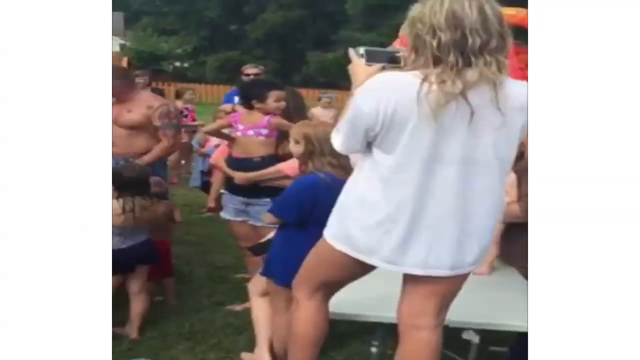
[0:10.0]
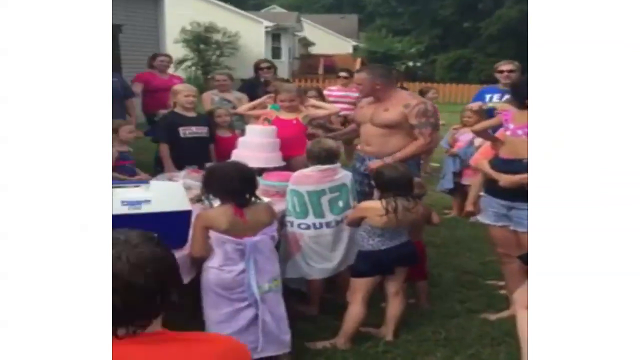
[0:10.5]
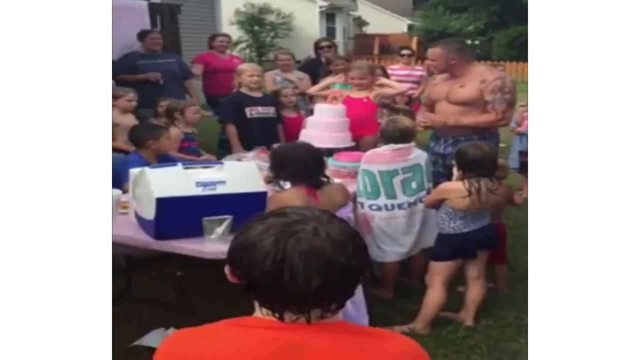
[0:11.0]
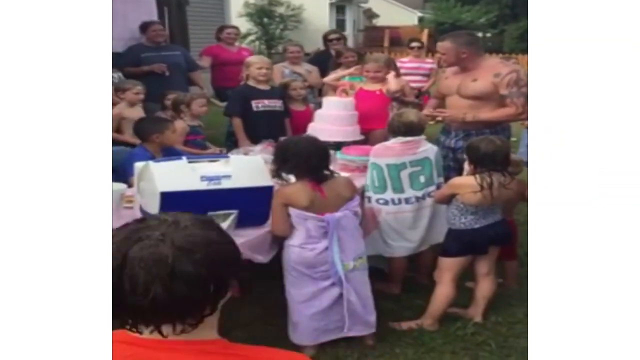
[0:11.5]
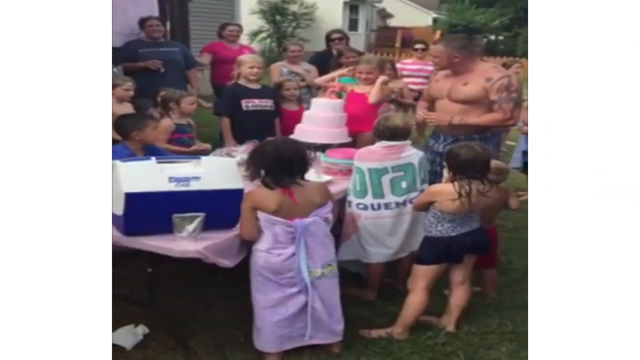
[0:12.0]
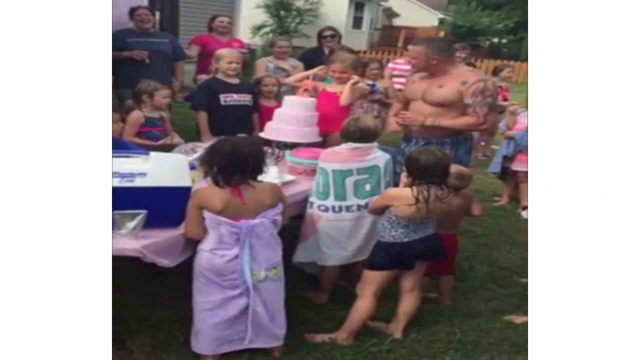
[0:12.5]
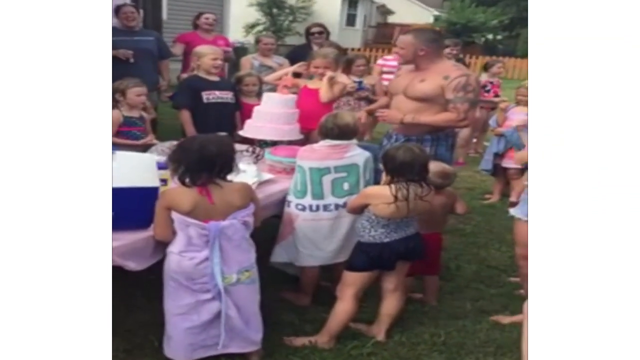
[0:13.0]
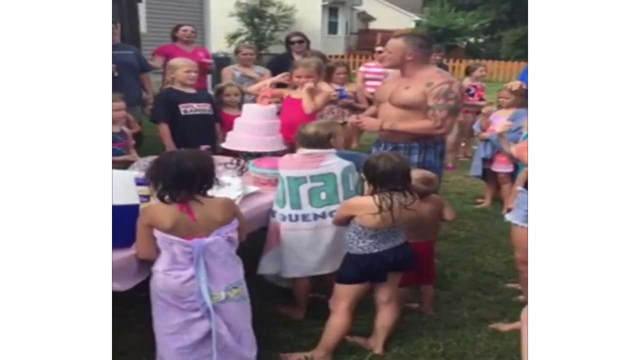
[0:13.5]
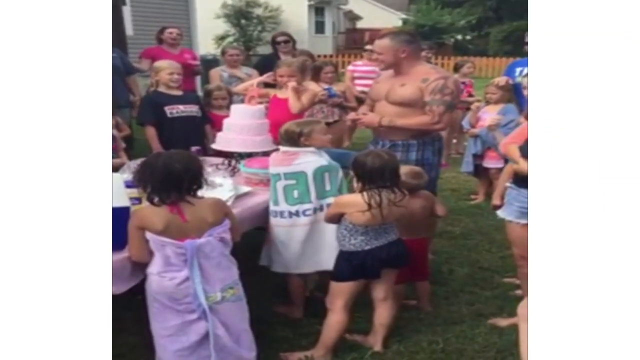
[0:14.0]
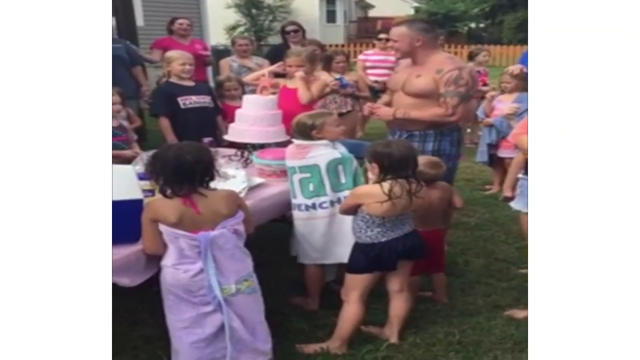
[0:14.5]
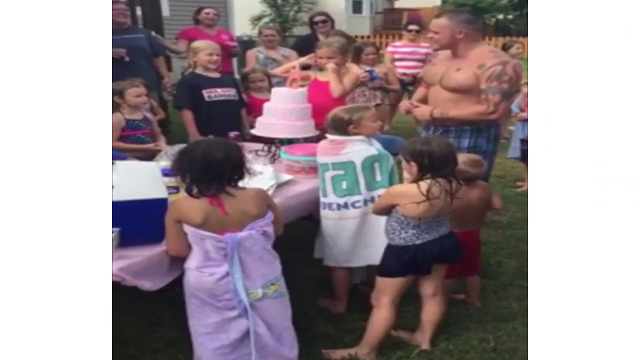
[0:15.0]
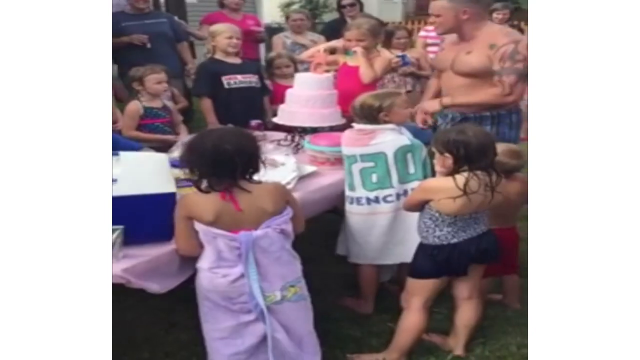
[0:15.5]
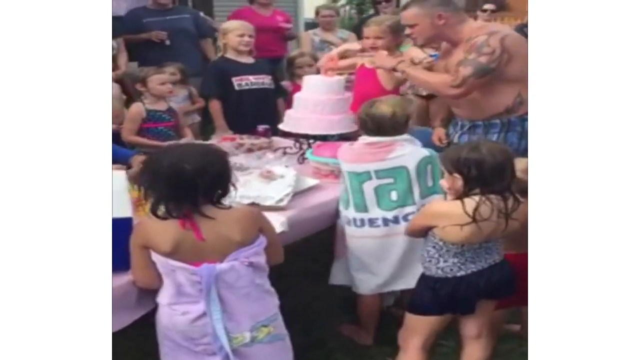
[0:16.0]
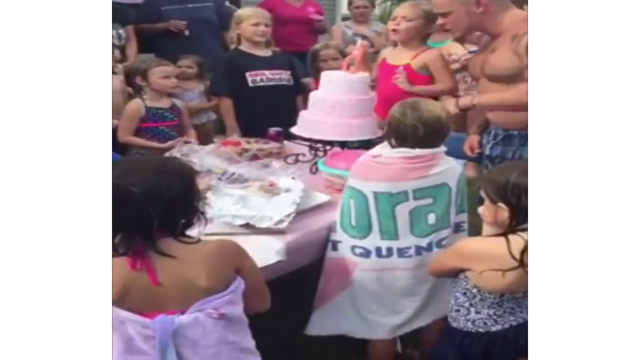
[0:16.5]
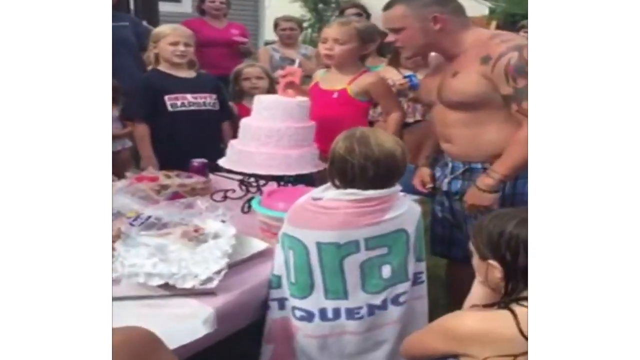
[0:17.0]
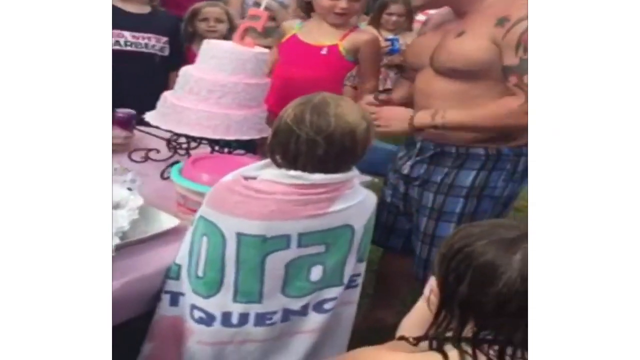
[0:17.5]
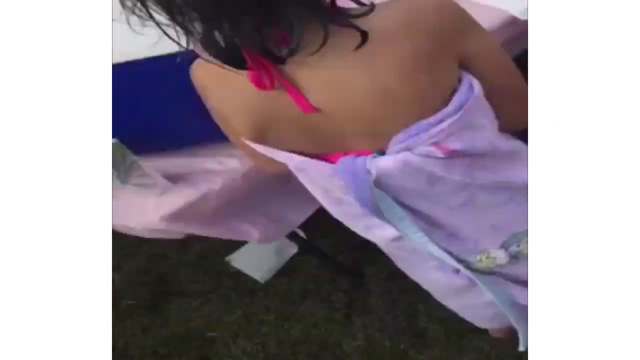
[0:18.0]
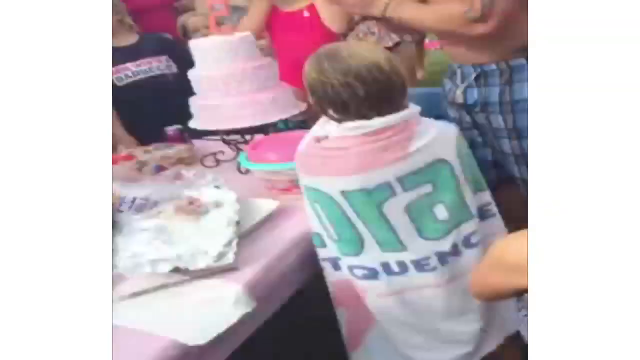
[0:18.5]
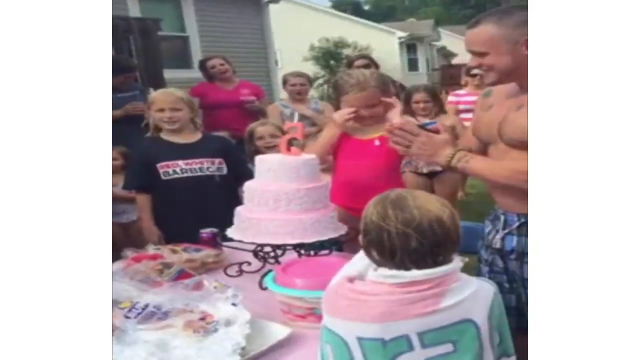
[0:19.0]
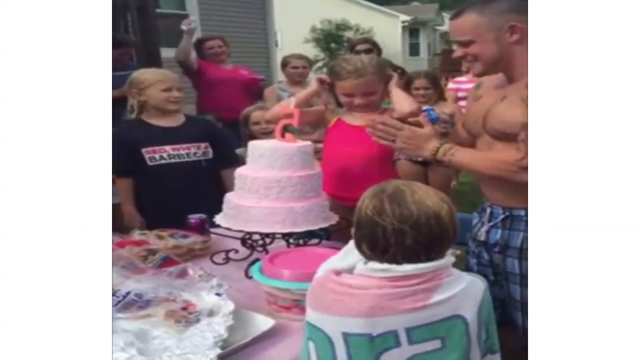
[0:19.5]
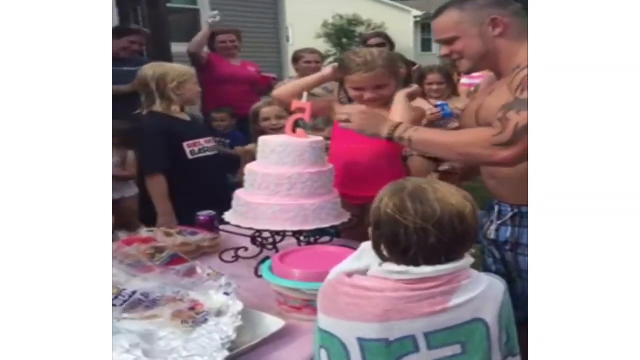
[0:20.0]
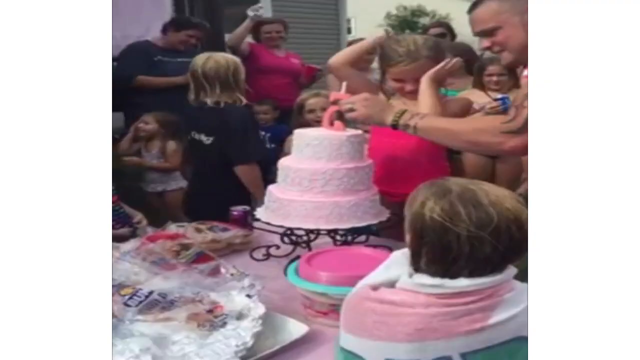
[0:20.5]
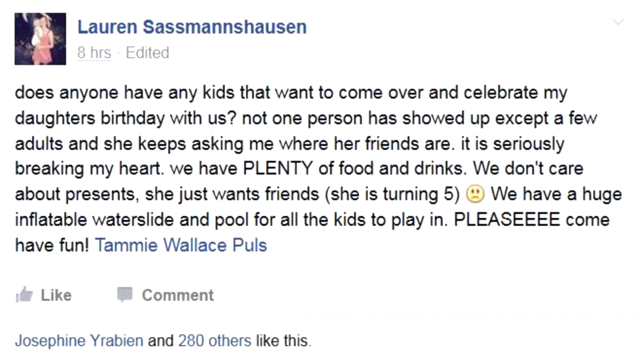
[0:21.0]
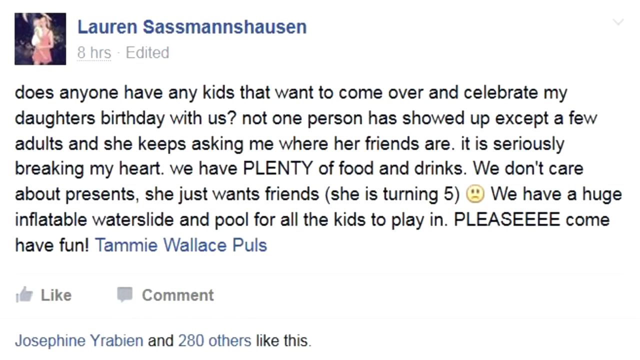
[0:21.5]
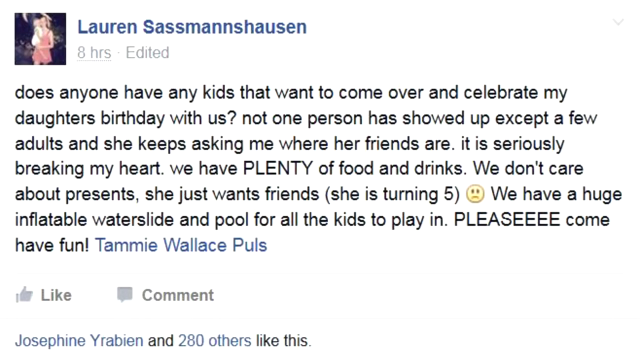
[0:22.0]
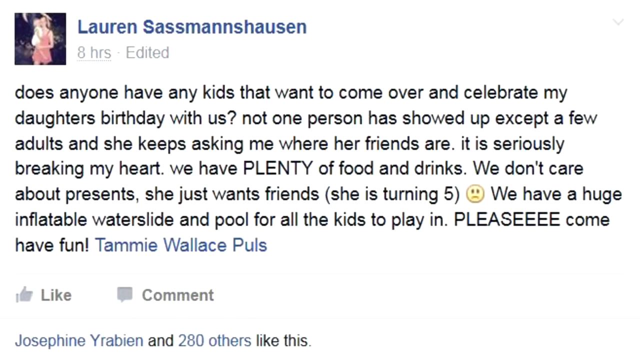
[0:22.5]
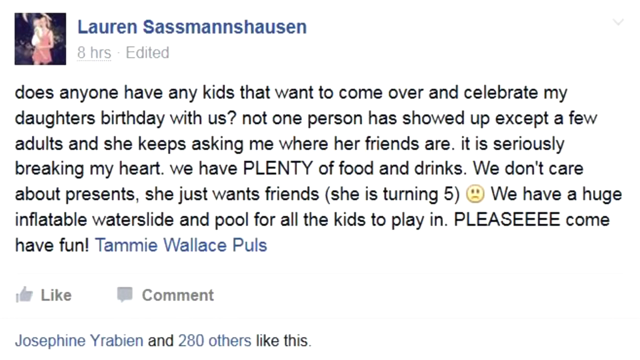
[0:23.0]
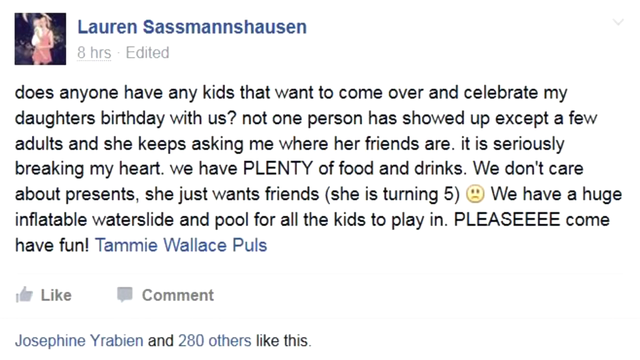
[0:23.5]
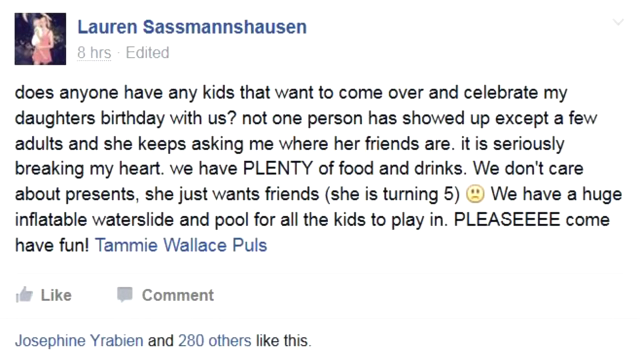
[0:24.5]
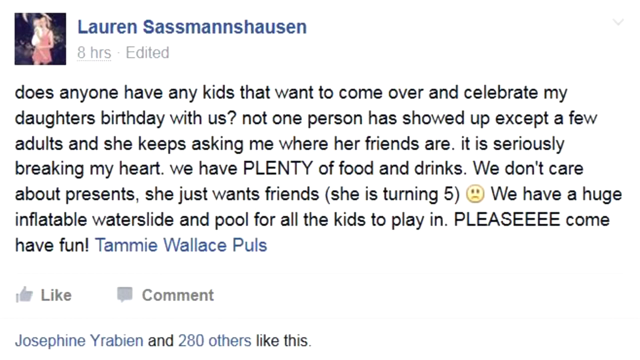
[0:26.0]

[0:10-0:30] The camera zooms in on the party, closing in on a white woman with curly hair who is wearing a white dress shirt. There is then a close-up of a man touching the top of the cake. The video transitions to a page written by Lorraine Sussman, which reads "does anyone have any kids that want to come over and celebrate my daughter's birthday with us" and goes on to say that only a few adults have shown up, that "it is seriously breaking my heart", and "we don't care about presents". The page also mentions a huge inflatable water slide and pool for the kids.